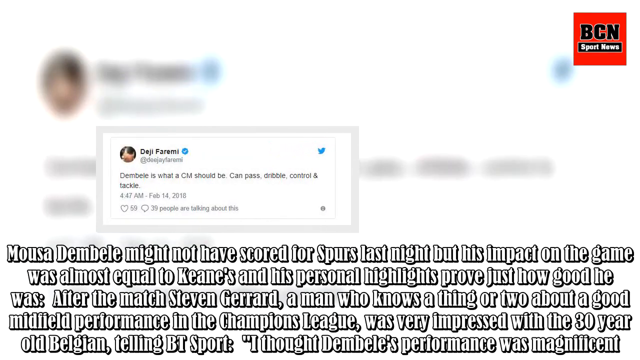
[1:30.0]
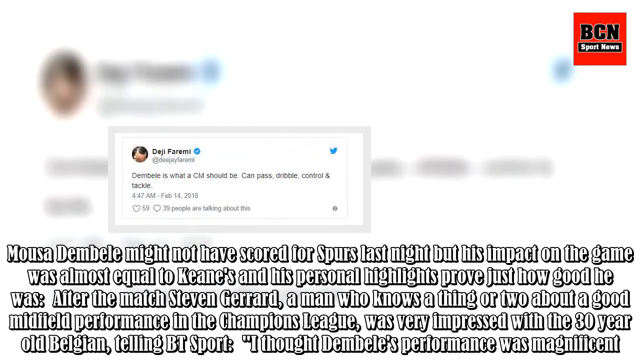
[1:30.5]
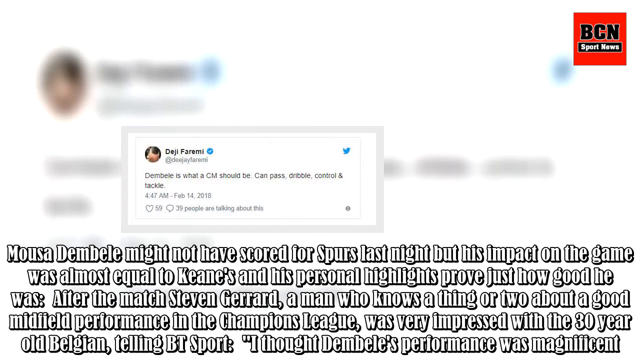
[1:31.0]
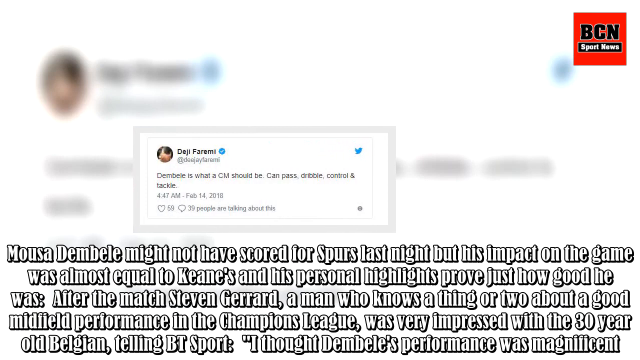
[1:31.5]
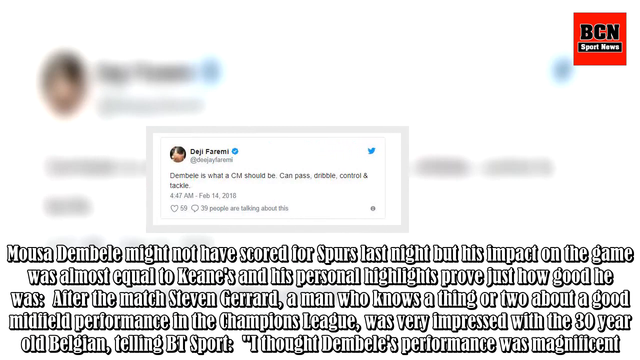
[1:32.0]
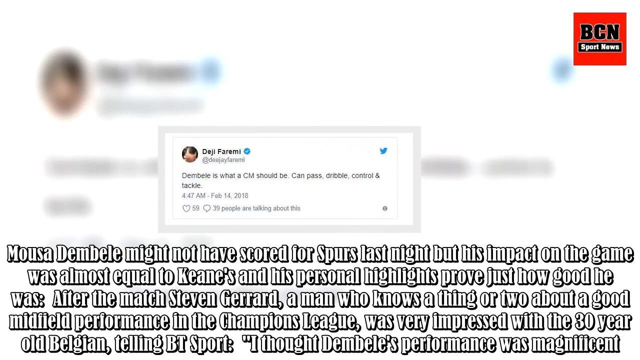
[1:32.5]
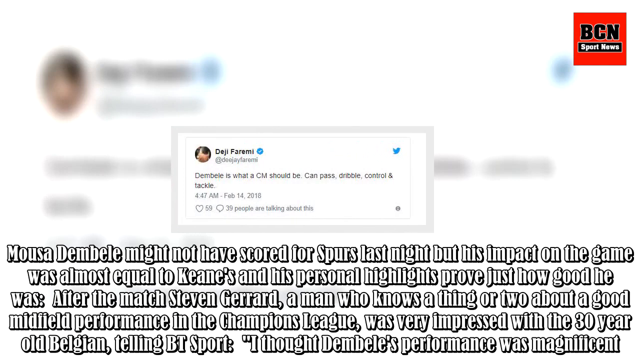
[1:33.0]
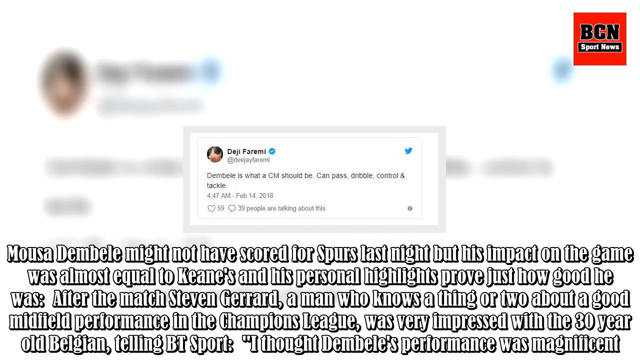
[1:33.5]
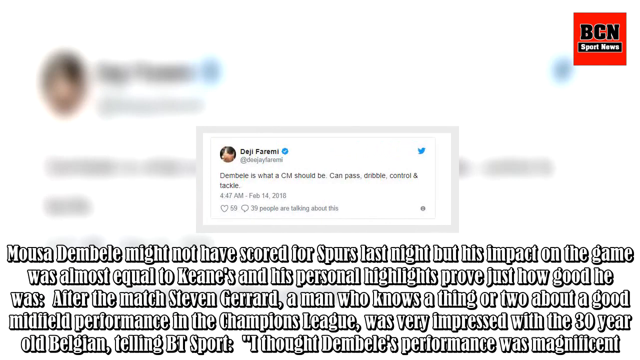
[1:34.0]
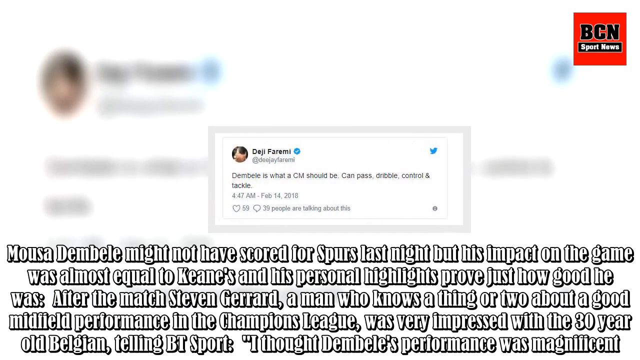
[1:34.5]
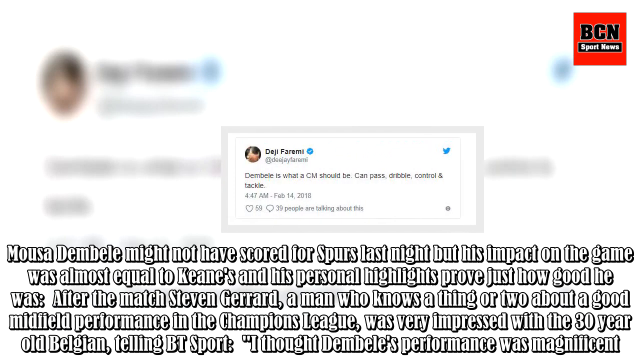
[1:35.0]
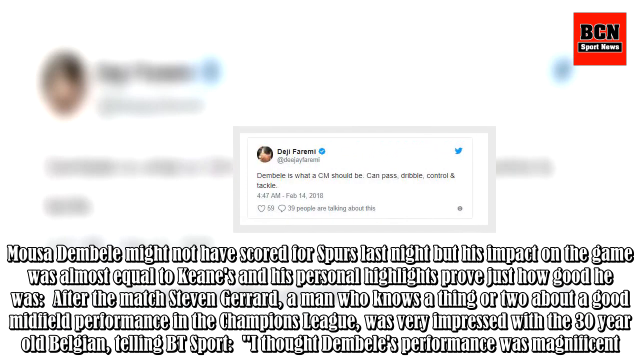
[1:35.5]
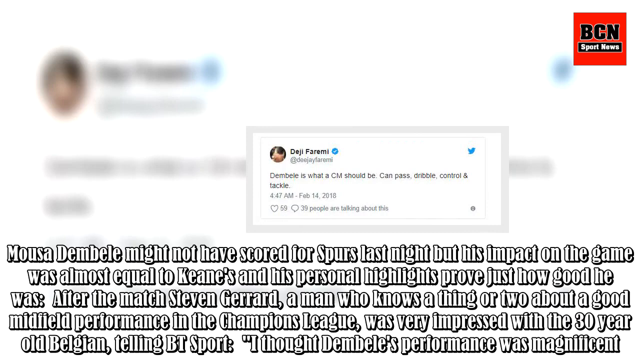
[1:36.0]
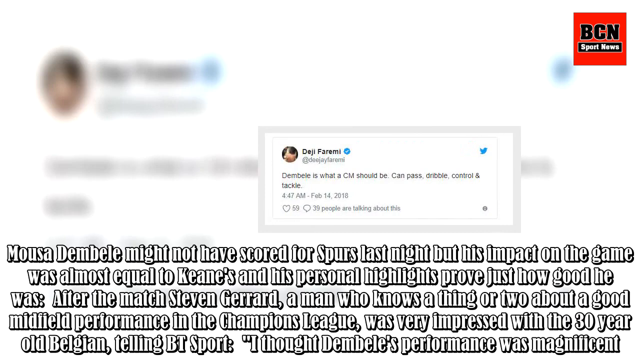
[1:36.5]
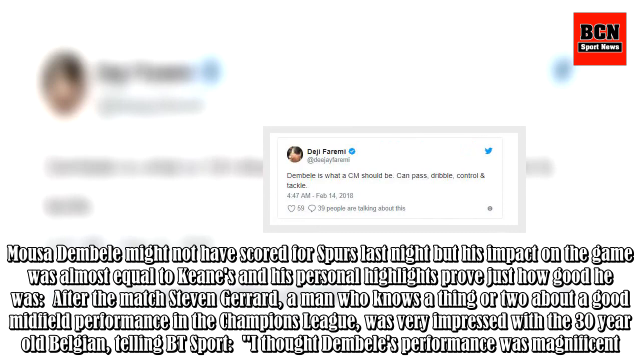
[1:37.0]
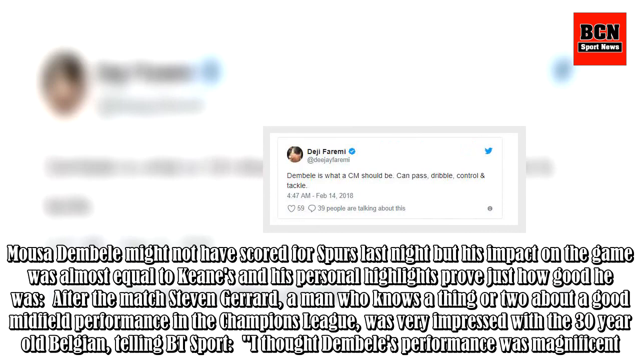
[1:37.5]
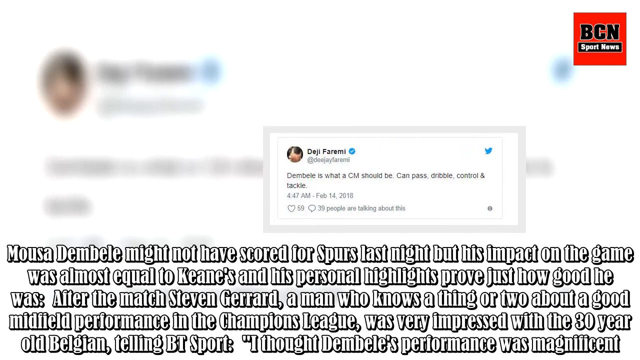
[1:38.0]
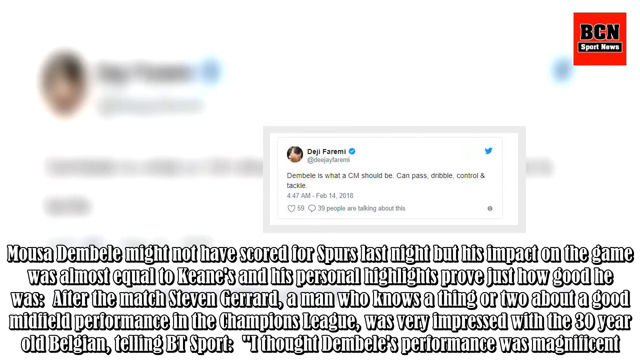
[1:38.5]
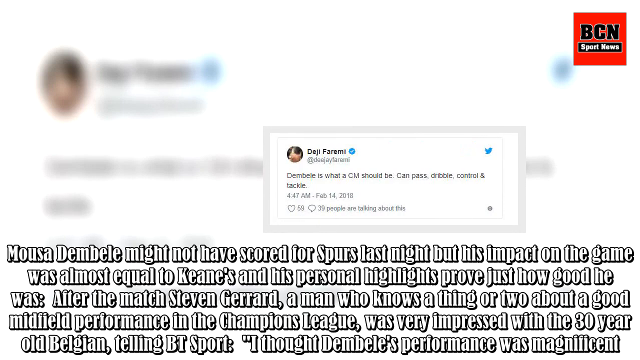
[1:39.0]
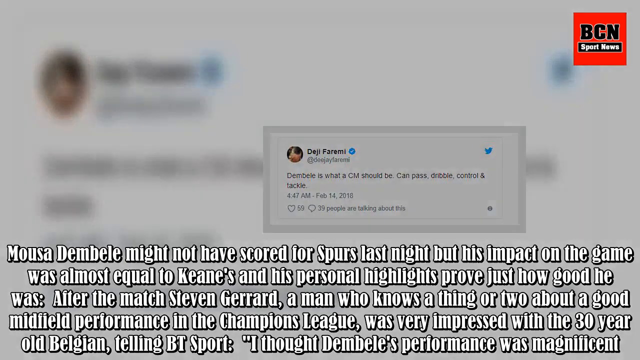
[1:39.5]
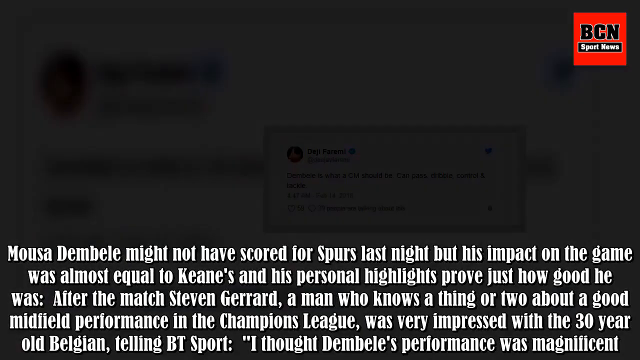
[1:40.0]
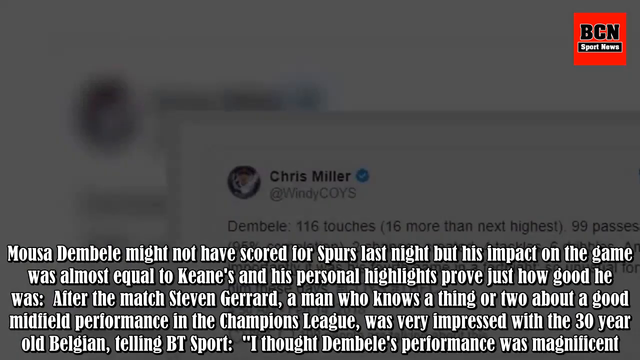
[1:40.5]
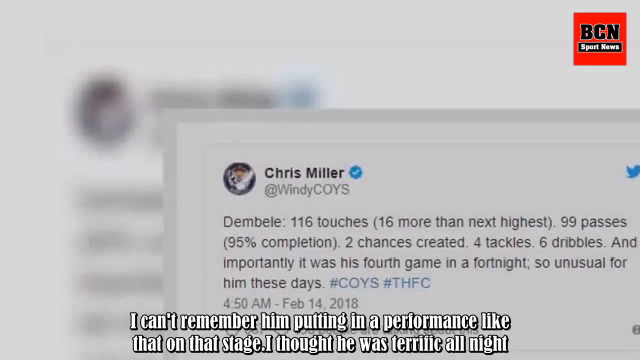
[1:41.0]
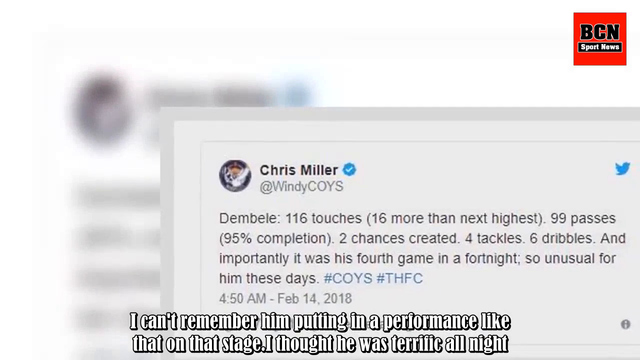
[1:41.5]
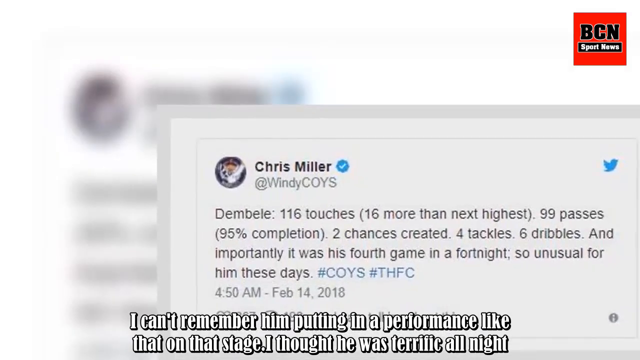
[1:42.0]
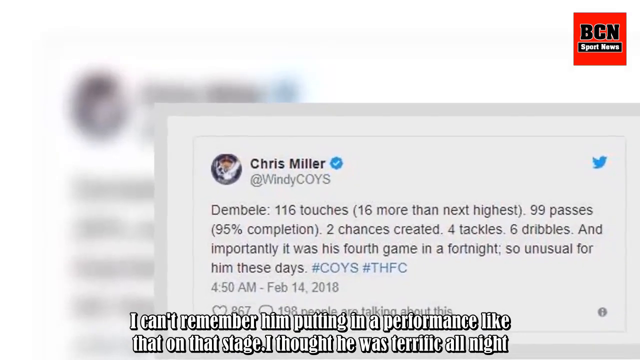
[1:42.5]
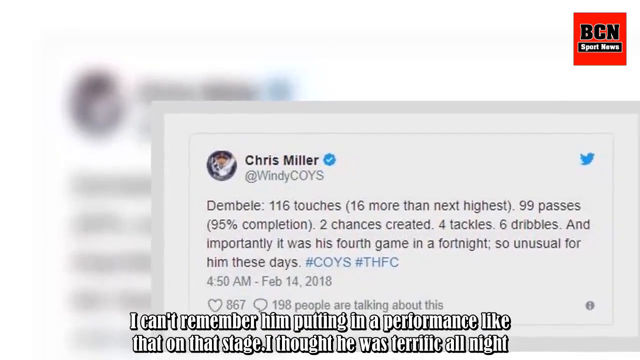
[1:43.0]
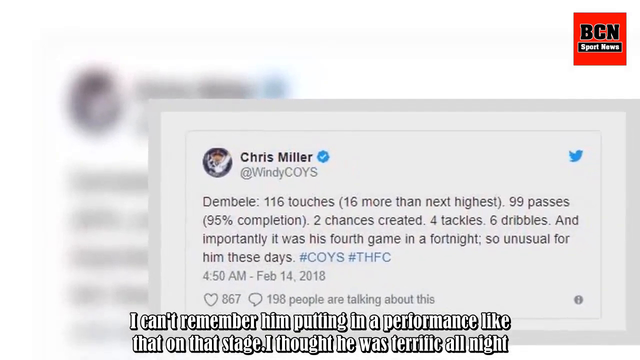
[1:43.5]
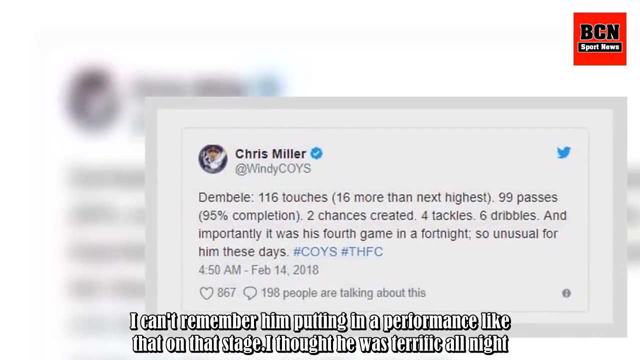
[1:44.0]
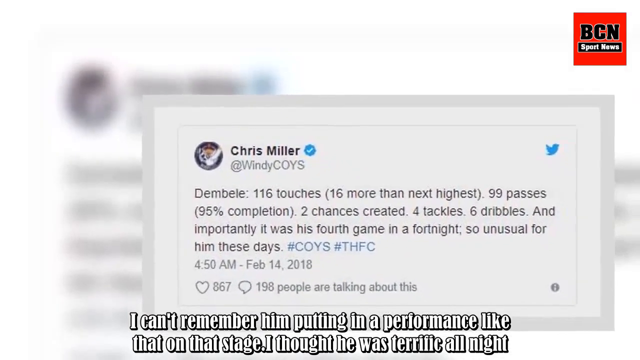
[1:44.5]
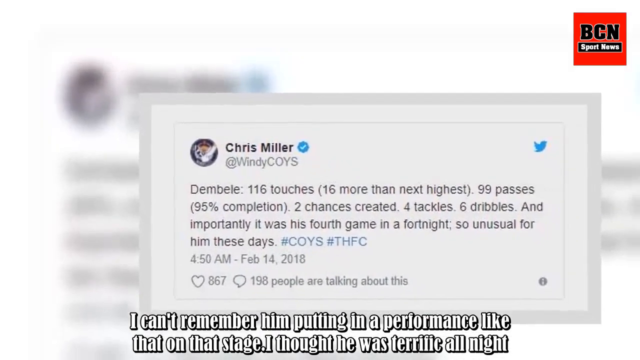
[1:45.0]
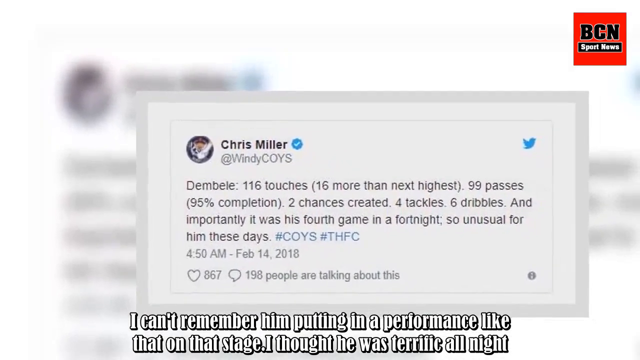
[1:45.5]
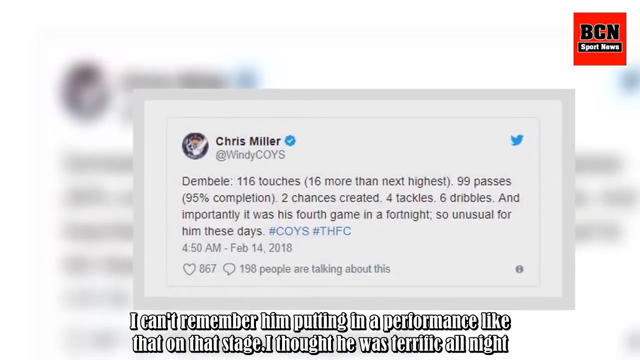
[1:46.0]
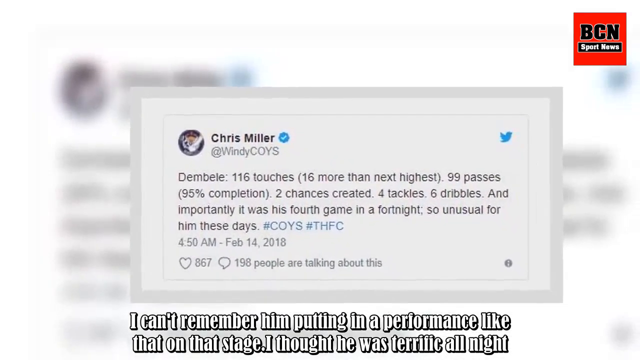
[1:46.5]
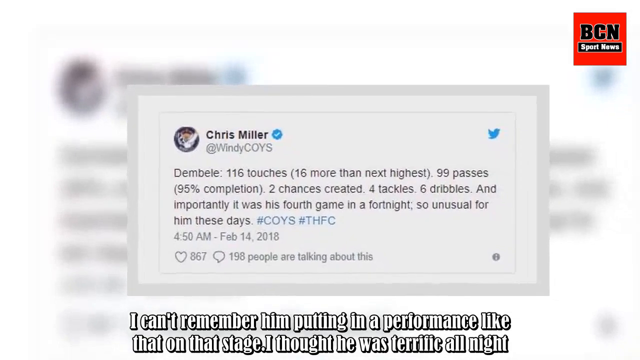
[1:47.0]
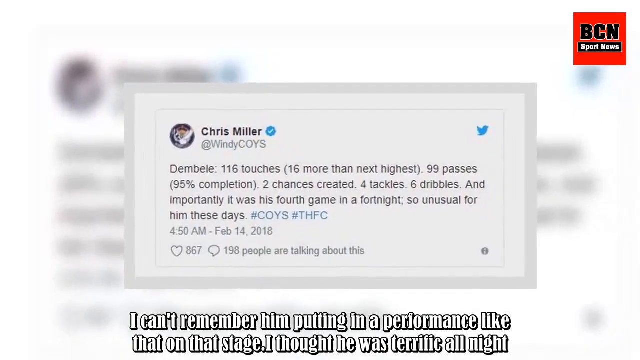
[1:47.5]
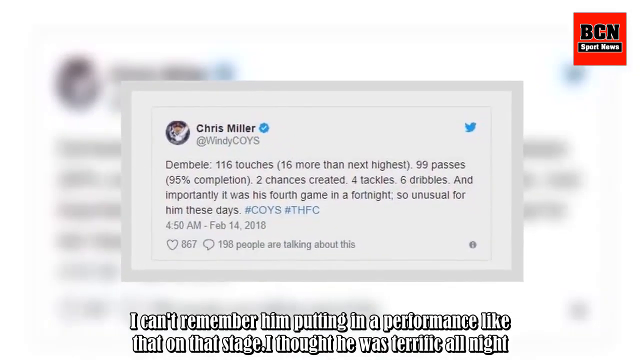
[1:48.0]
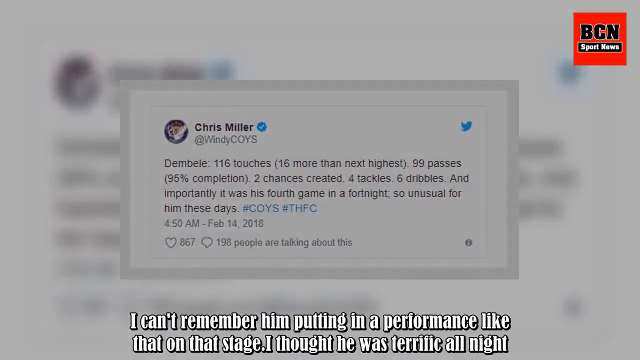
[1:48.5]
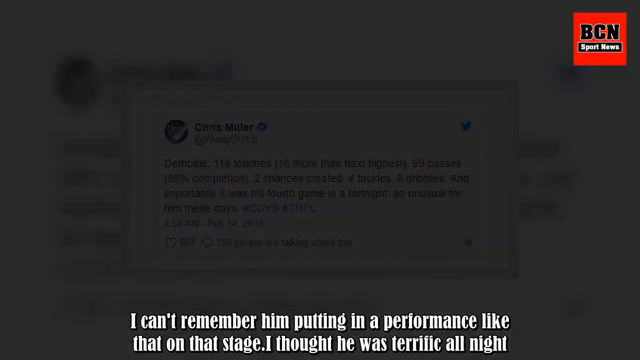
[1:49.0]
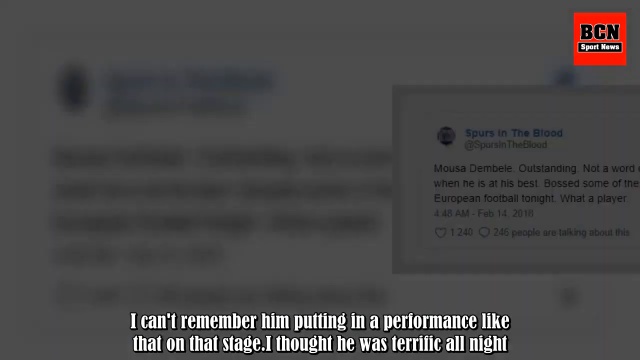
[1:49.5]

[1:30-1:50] The text about Steven Gerrard praising the 30-year-old Belgian's performance to BT Sport remains, with Deji's post above saying he is what a CM should be, able to pass, dribble, control and tackle. The view fades out, and a post from Chris Miller appears: "Dembele, 116 touches, at 16 more than the next highest, 99 passes, at a 95% completion, two chances created, four tackles, six dribbles, and importantly, it was his fourth game in a fortnight, so unusual for him these days." Another person's post says "I can't remember him putting in a performance like that on stage. I thought he was terrific all night." It was posted on February 14th, 2018, and has 867 likes and 198 people talking about it.